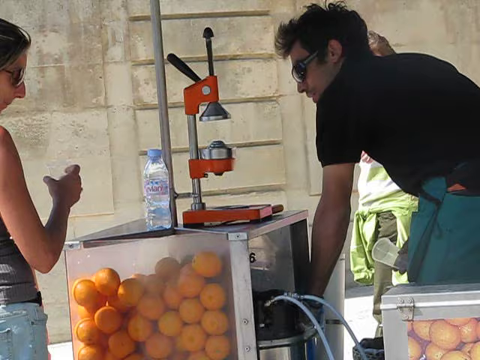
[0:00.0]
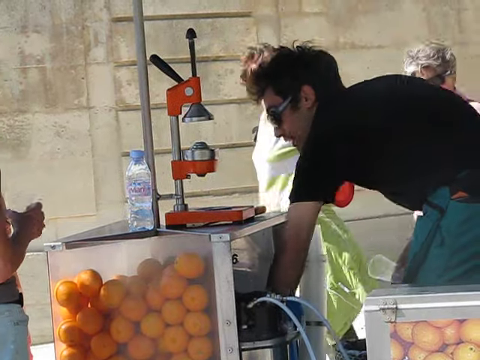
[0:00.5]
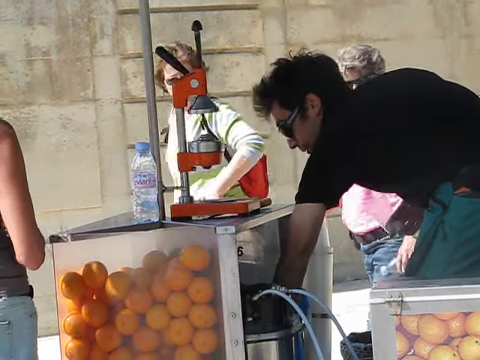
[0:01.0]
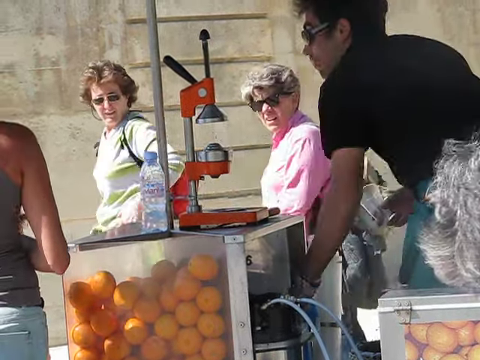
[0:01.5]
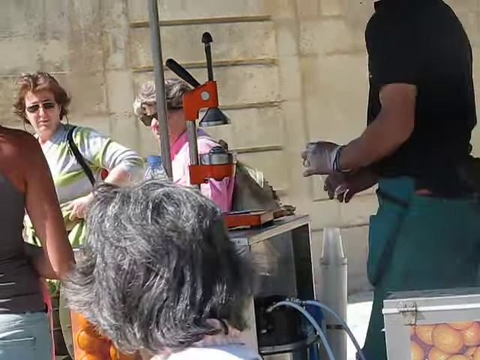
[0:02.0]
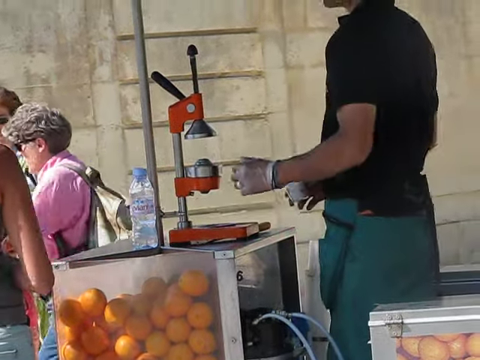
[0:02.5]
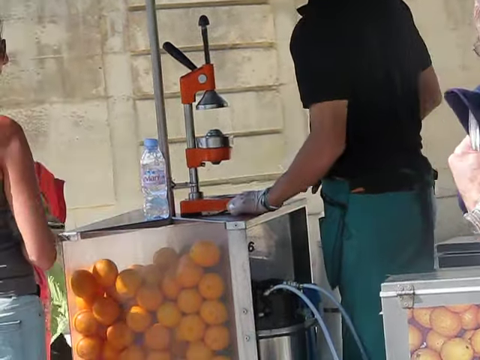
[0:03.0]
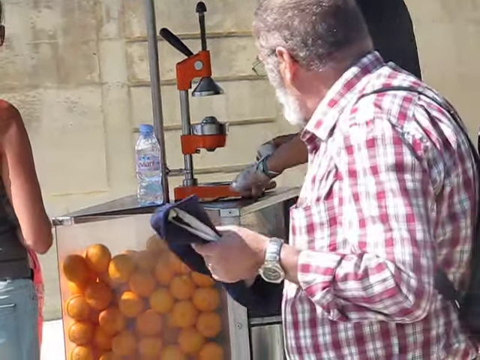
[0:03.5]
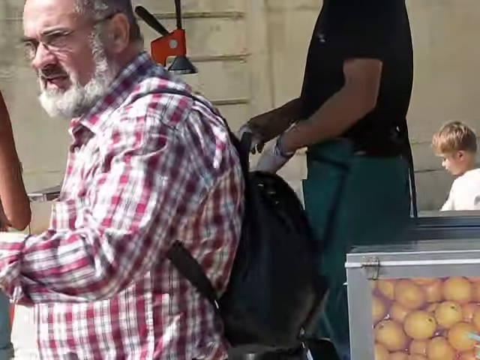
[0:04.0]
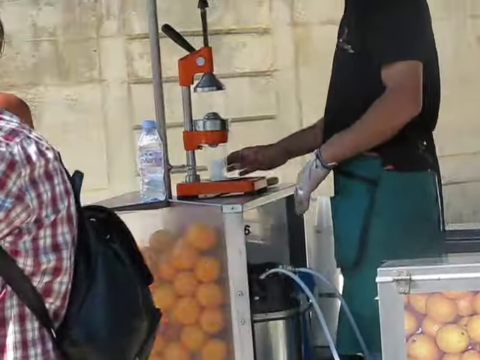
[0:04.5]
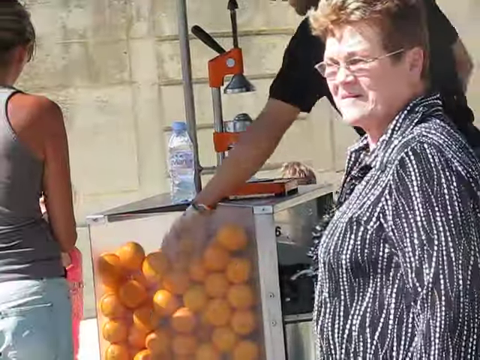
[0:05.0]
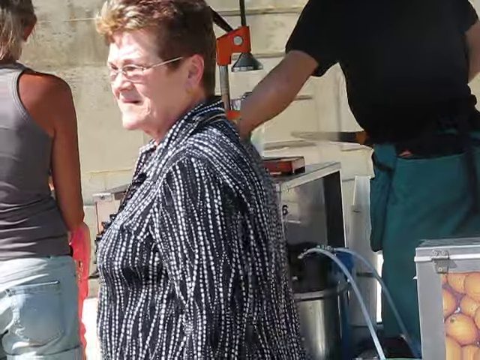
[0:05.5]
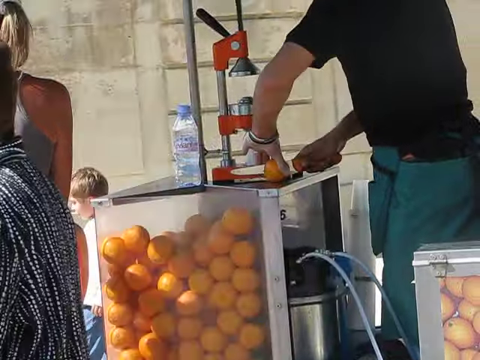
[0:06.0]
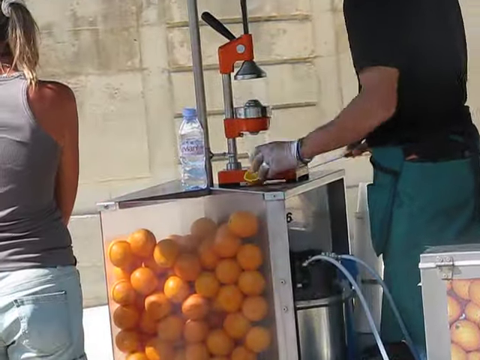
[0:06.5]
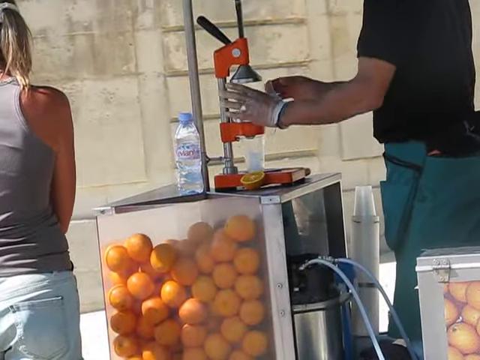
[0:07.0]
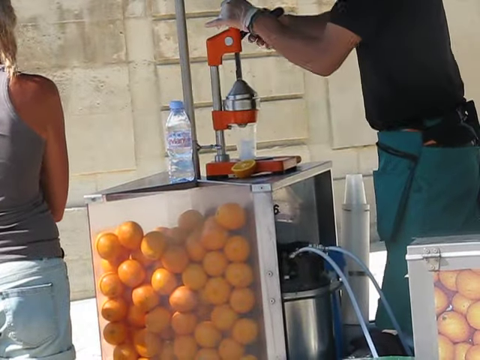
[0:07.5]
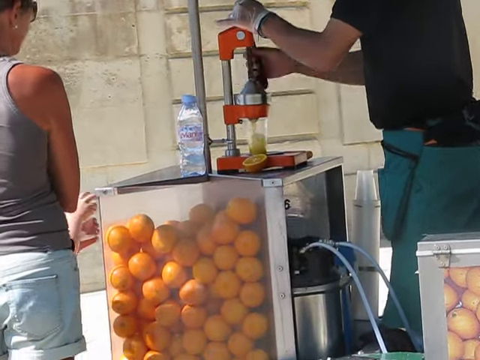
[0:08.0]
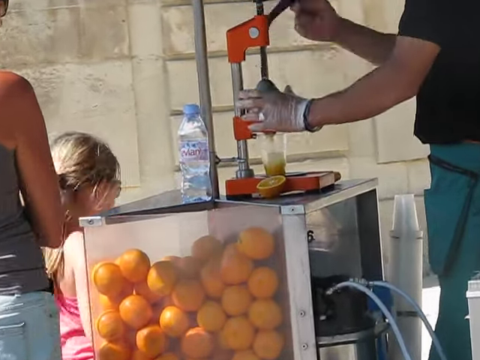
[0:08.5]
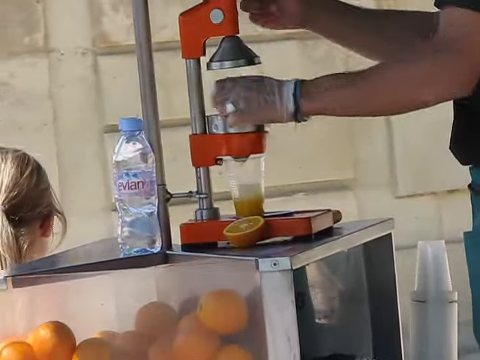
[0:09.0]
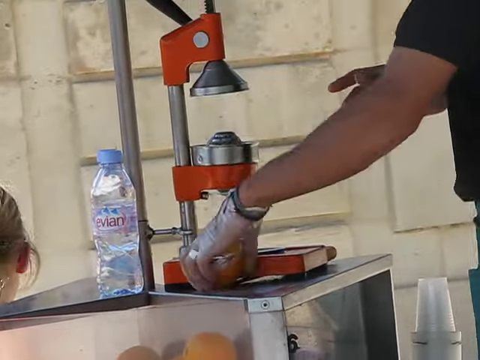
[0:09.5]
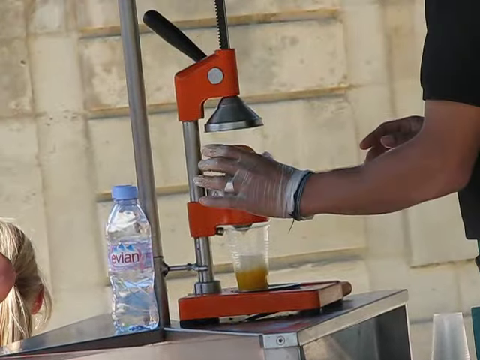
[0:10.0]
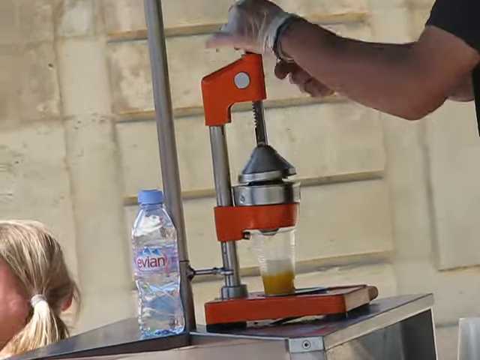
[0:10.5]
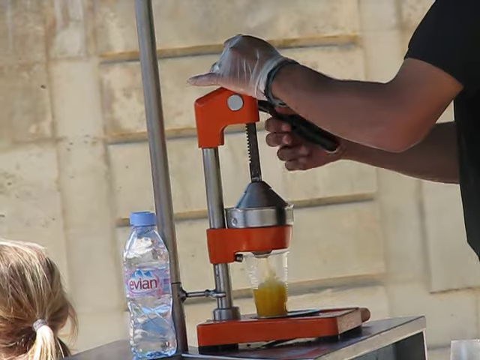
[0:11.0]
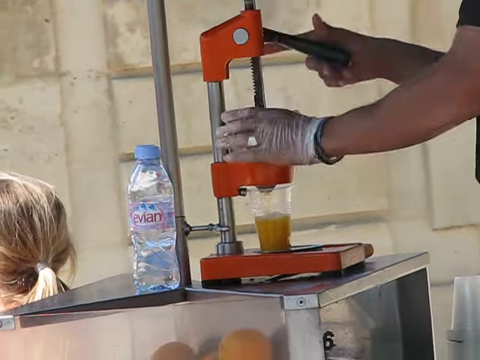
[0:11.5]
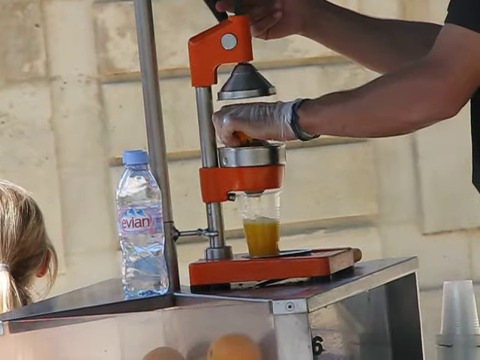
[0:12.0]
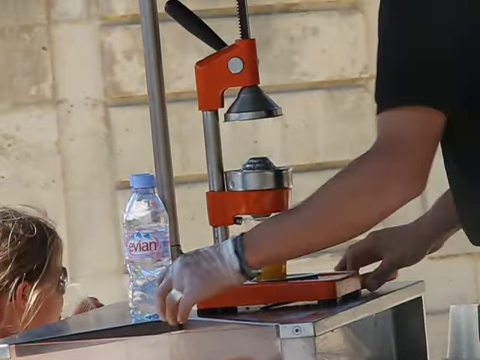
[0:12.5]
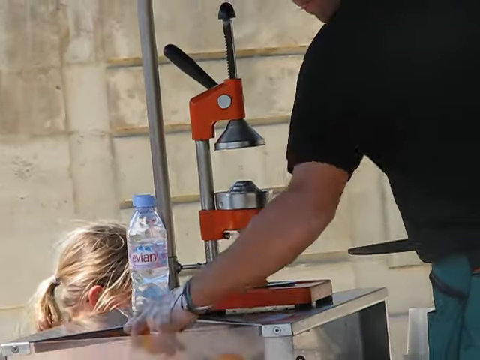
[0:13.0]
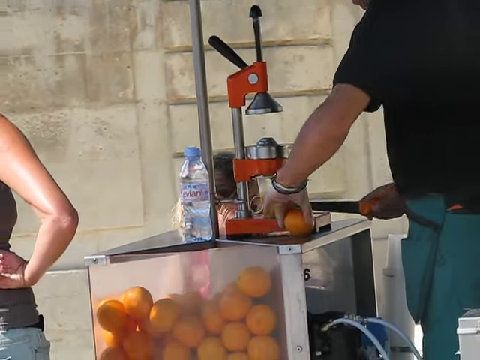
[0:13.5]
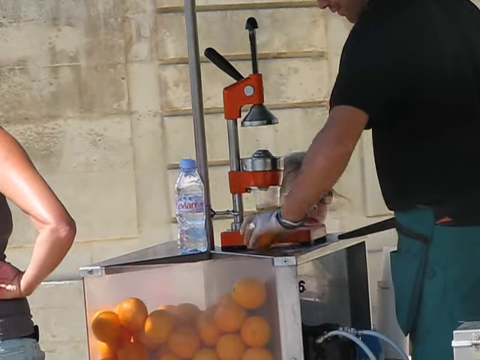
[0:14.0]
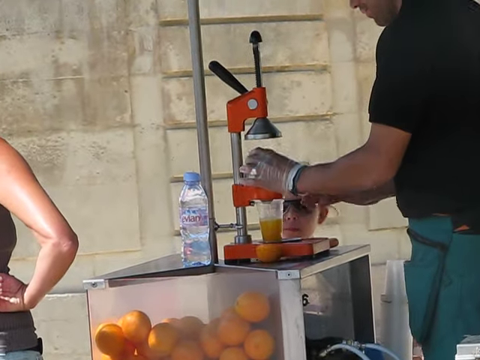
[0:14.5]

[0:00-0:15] A man stands in front of what appears to be an orange stand, possibly an orange juice stand. He wears a black shirt, teal shorts and black glasses. He reaches down into a container and seems to grab something out of it, maybe gloves. Several people pass by the camera in front of the man. The man starts to cut a piece of orange, and it looks like he puts it into some type of device to make orange juice. Wearing clear plastic gloves, he pushes down on the machine and pours the orange juice into a plastic cup, filling it almost to the top, probably about 75% of the cup. To the left of it is a plastic bottle with a light blue cap that looks like it says "Evian" on it. A little girl stands in front of the man making the orange juice. Several oranges are underneath the machine inside a container so the man can easily grab them. Behind the man in the background is a wall of a sort of light brownish color; it is very marked up and has several horizontal, apparently, blocks. Some of the people passing by the orange stand, mostly older people, look towards it. A gray-haired man in a car passes by looking at the orange stand, as do two older women.